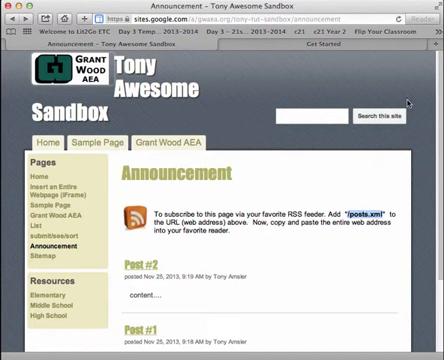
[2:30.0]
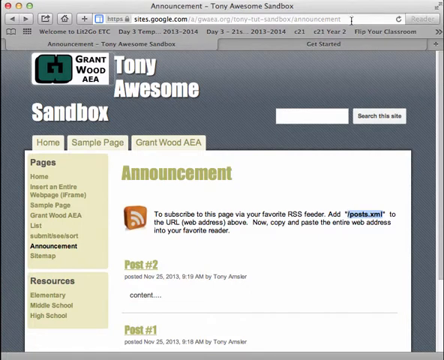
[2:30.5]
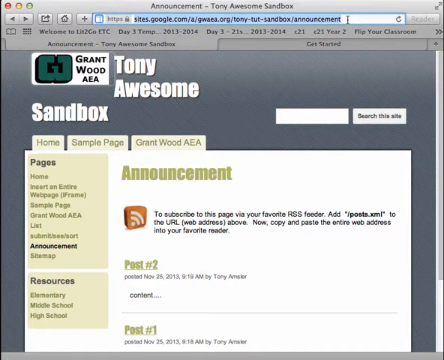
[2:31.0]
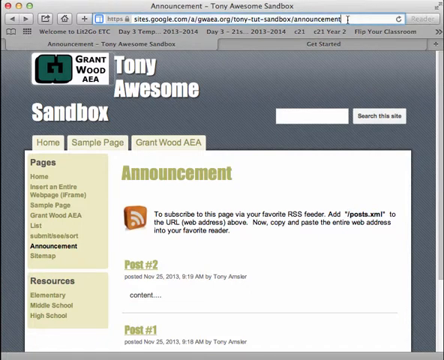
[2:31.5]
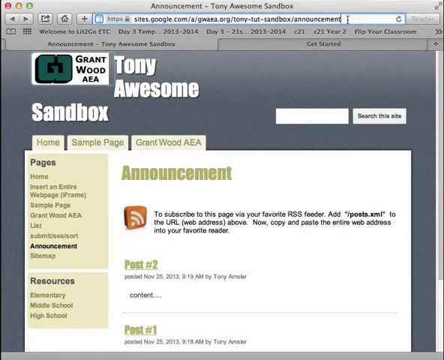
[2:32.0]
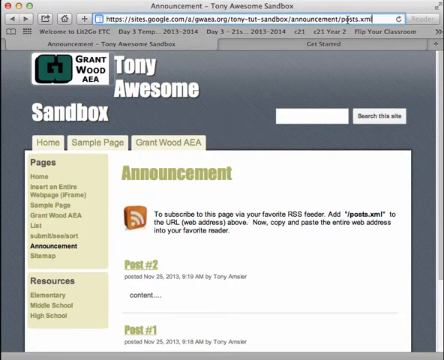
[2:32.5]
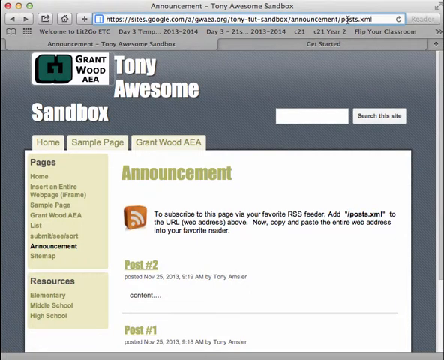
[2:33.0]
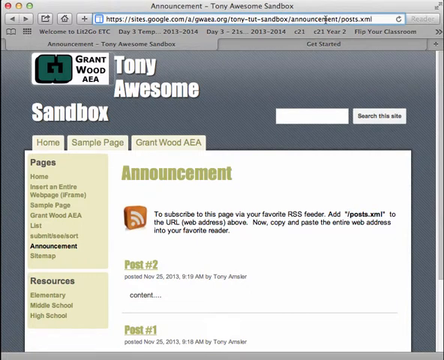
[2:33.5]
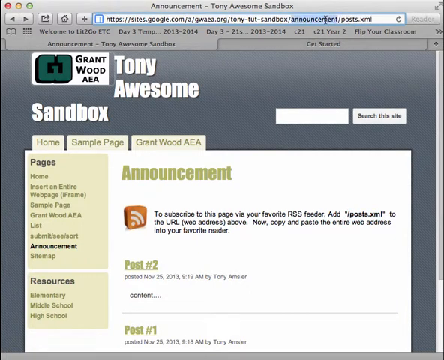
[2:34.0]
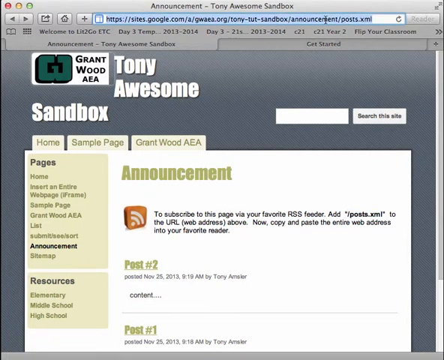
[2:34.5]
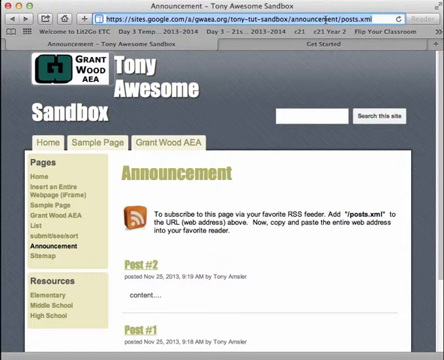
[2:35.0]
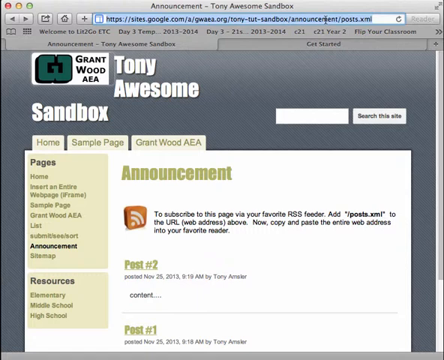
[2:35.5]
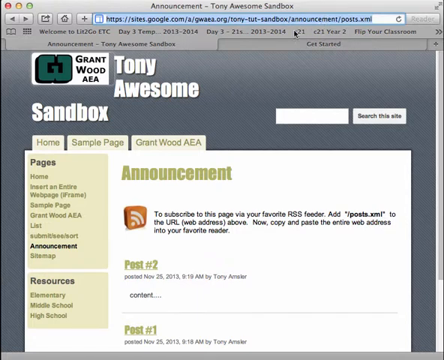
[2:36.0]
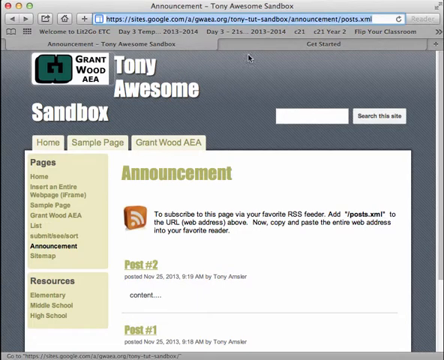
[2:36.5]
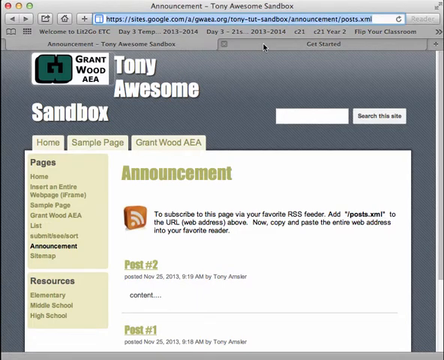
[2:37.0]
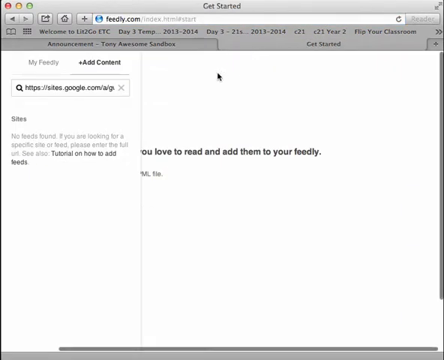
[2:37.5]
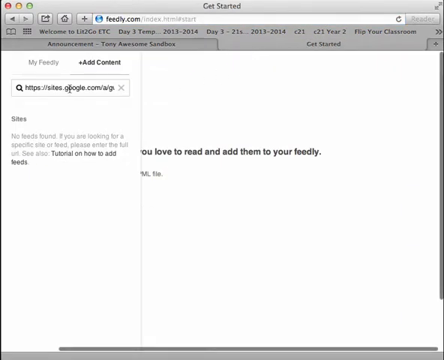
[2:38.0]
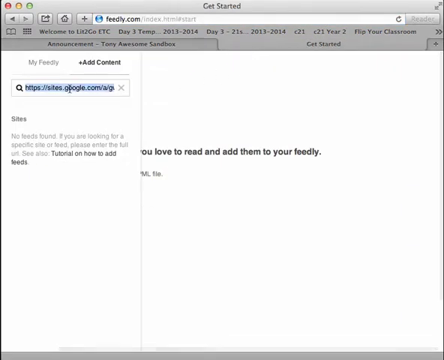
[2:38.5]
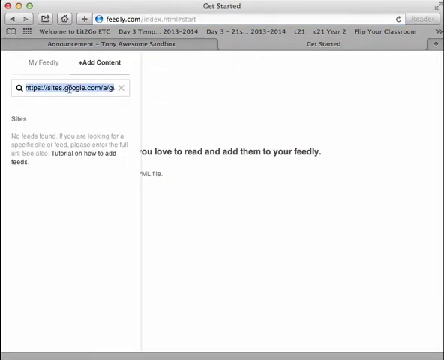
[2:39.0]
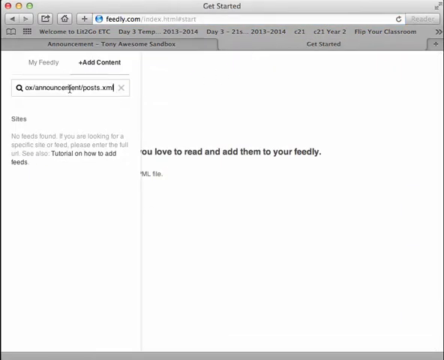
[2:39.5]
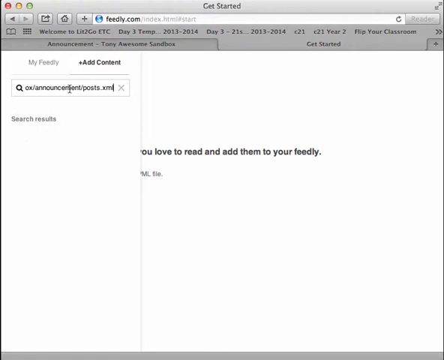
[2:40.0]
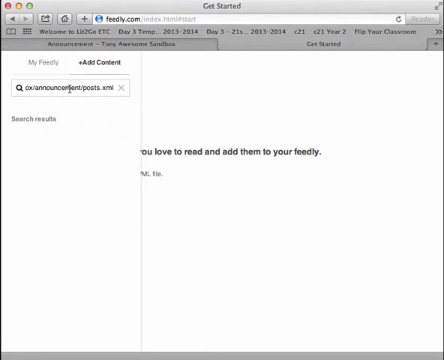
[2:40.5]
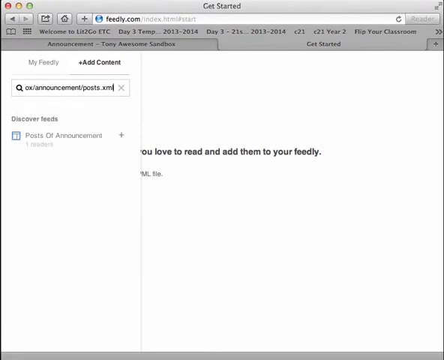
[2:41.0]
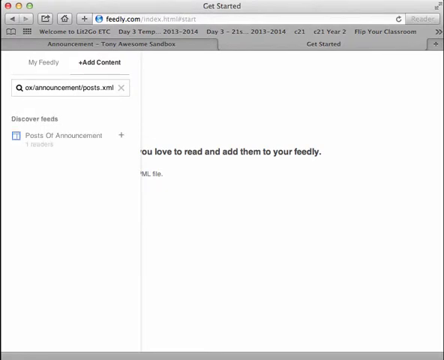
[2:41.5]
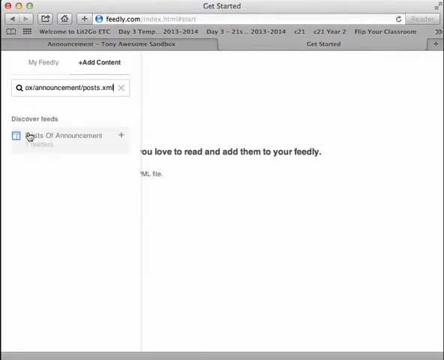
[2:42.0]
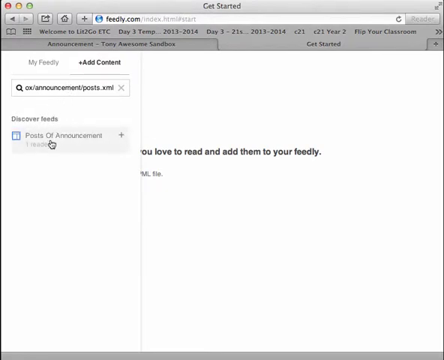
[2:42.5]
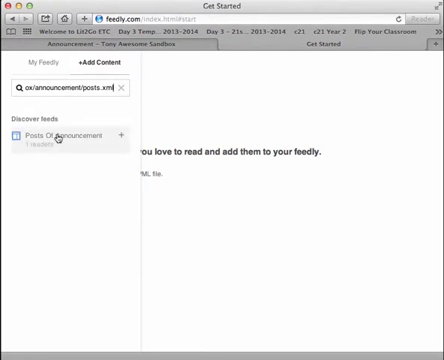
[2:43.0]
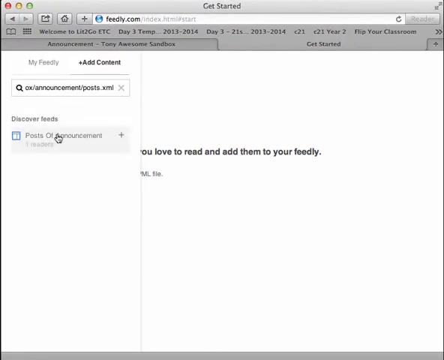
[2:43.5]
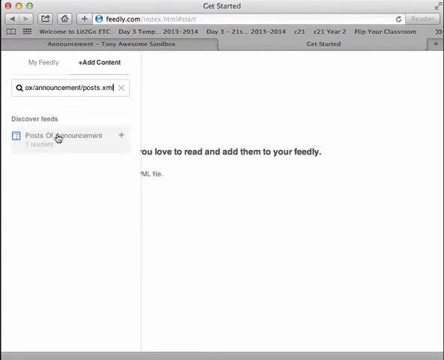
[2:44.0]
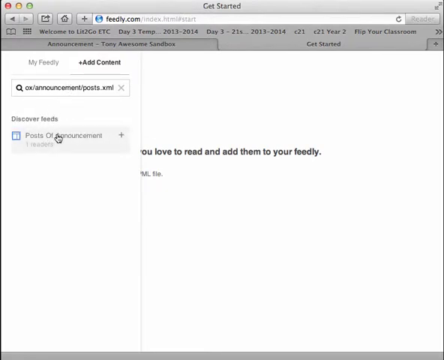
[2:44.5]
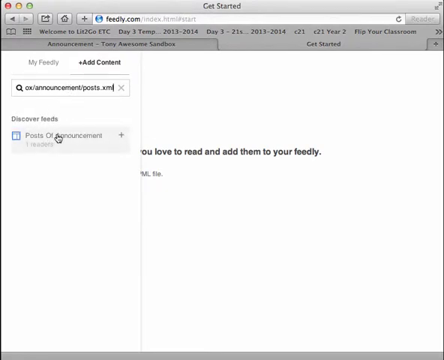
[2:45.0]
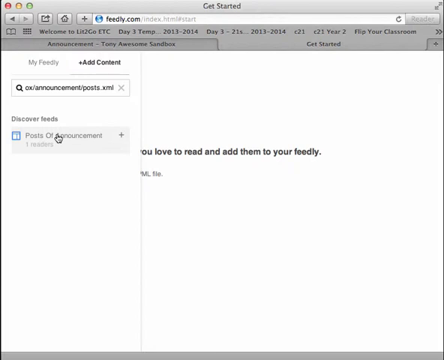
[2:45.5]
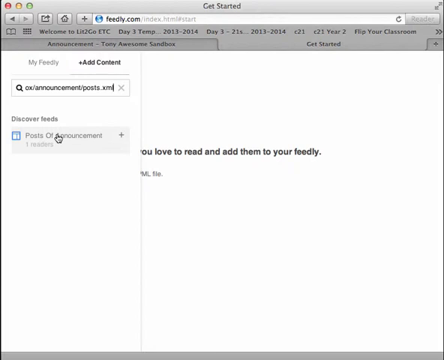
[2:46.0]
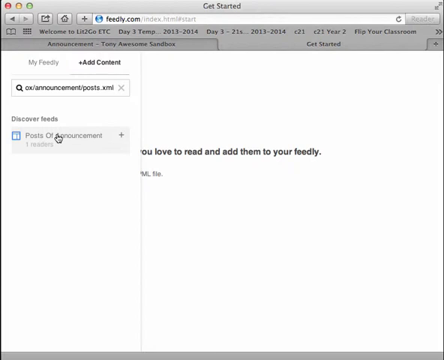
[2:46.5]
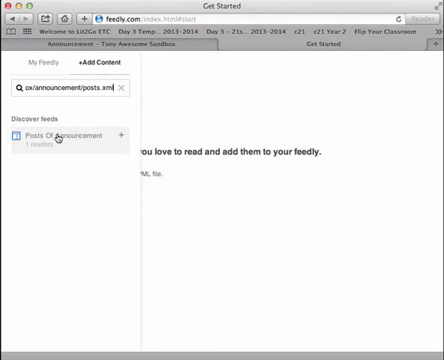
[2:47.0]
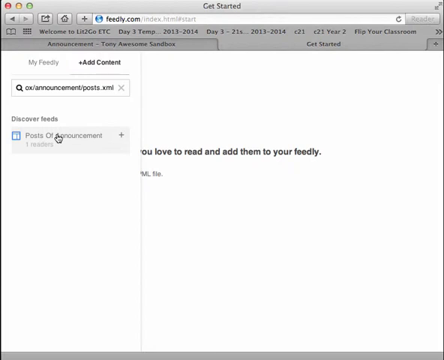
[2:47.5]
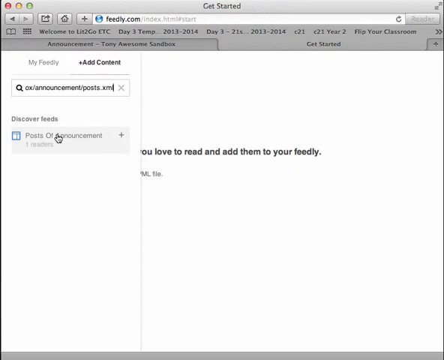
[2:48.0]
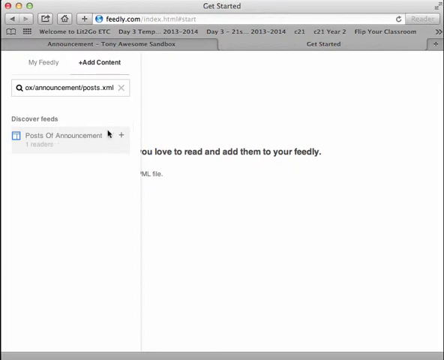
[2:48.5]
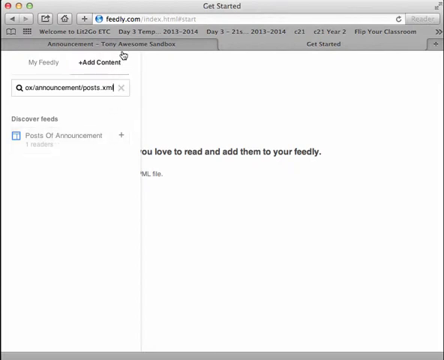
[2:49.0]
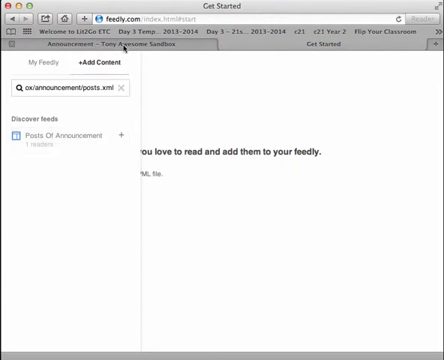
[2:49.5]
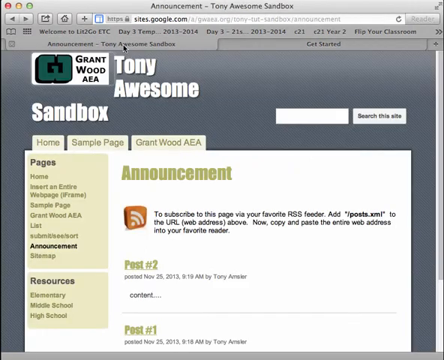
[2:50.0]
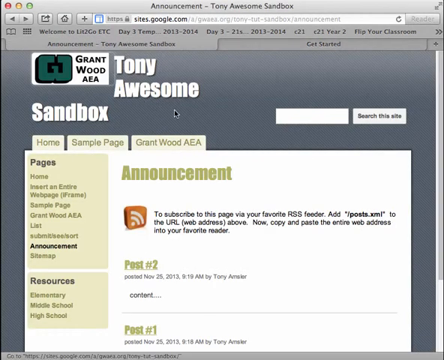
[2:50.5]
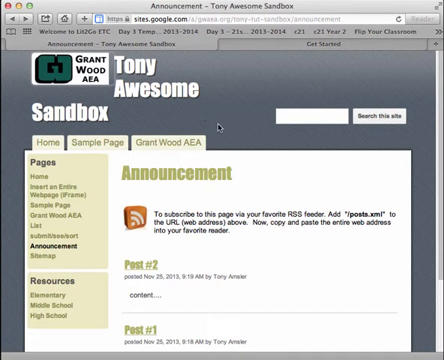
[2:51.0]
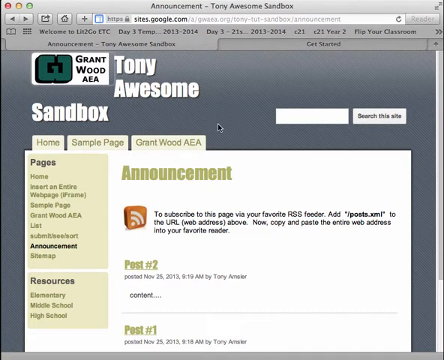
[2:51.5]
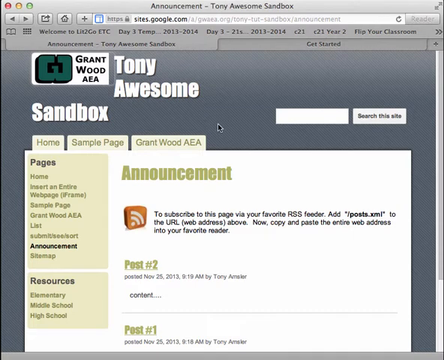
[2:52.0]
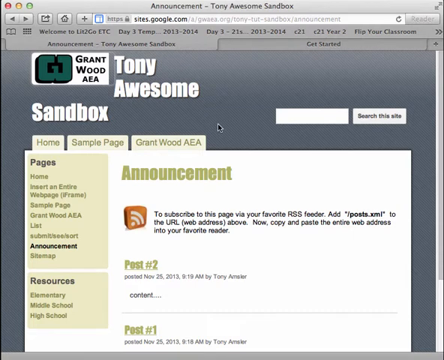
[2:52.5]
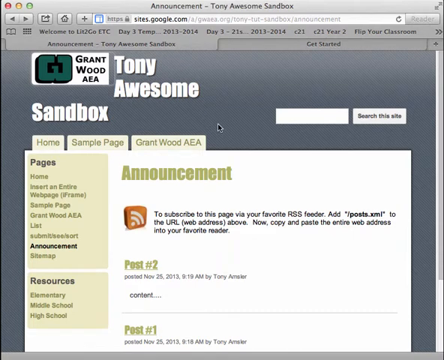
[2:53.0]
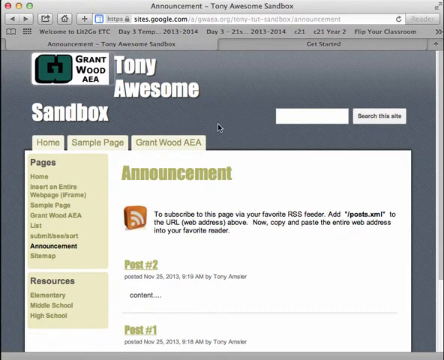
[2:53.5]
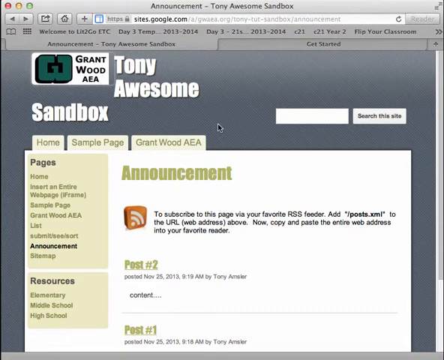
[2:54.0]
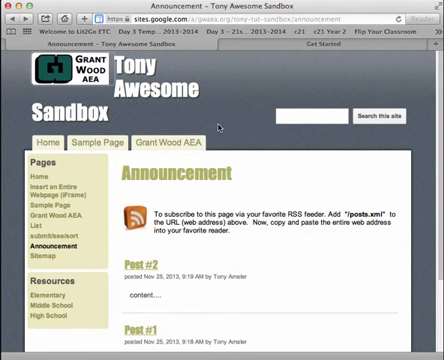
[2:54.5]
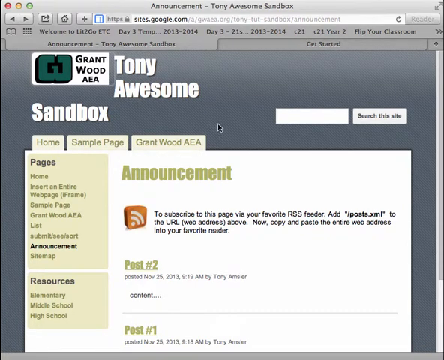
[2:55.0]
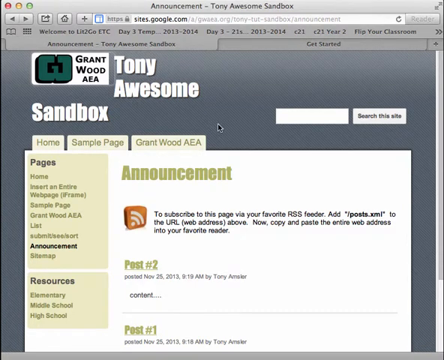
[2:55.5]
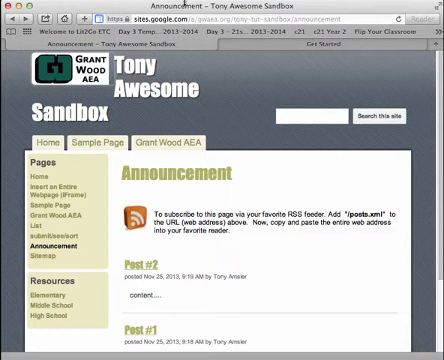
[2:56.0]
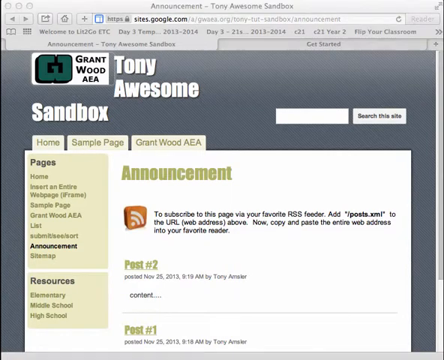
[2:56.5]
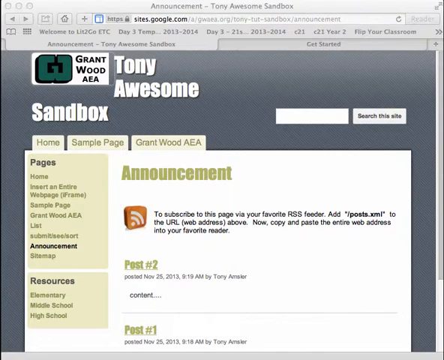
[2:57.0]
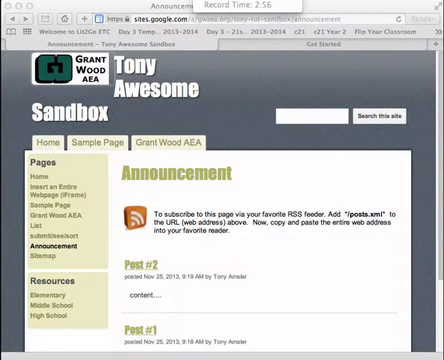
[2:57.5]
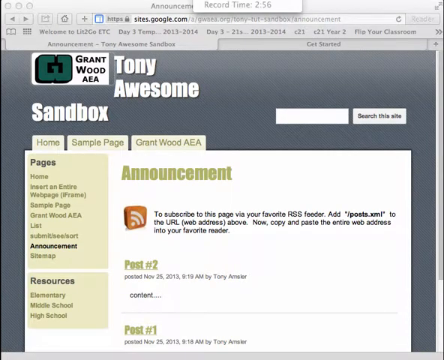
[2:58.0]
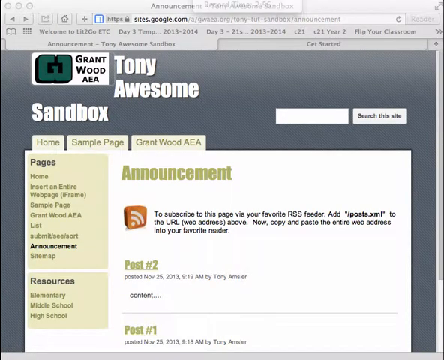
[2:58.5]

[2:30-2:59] The user highlights the website address, pastes "/posts.xml" at the end, copies the whole address with the correct ending, and goes back to the Get Started tab. There is a search box, with "Search Results" under it. Above the search bar are 2 tabs, "My Family" and "Add Content"; Add Content is selected, in bold. The user types the new website into the search bar and hits enter. Under "Discover Feeds" it says "Posts of Announcement," and under that, in small writing, it apparently says "1 readers." The user then clicks on Announcement Tony Awesome Sandbox and goes to the very top of the website. The tabs at the top of the screen turn light grey instead of grey. A box appears that says "Record Time 2 minutes, 56 seconds," and the user ends the recording.